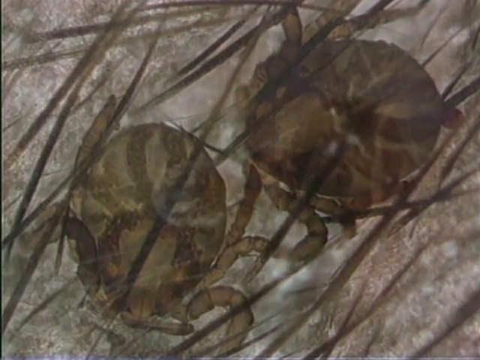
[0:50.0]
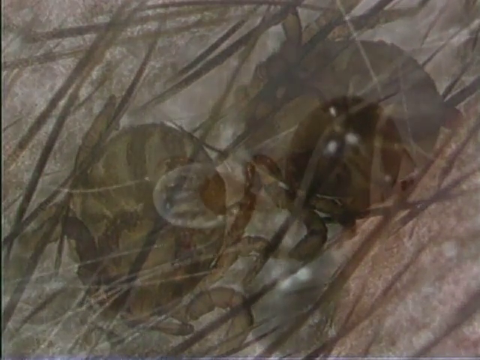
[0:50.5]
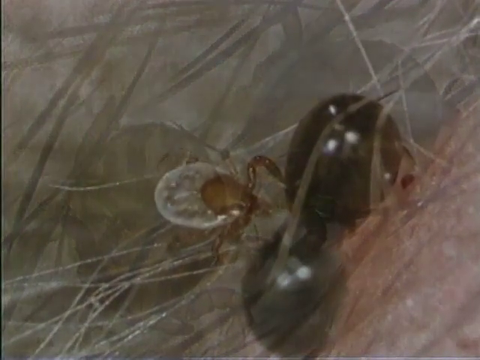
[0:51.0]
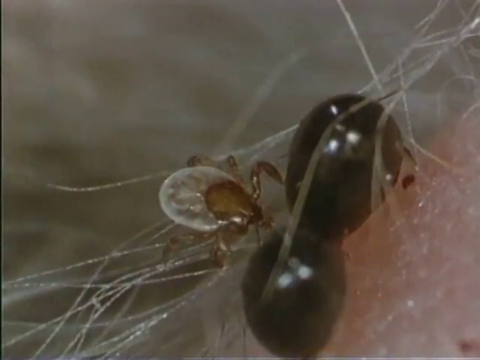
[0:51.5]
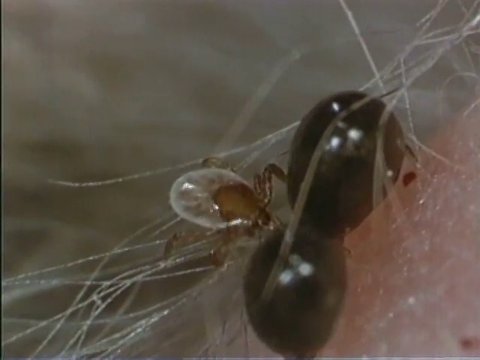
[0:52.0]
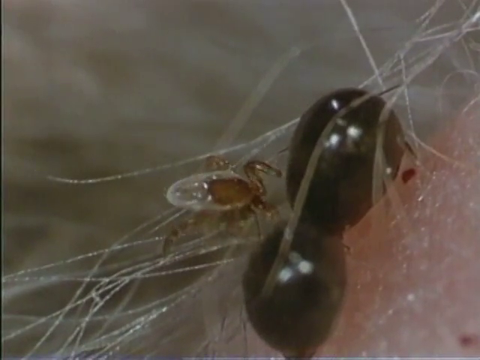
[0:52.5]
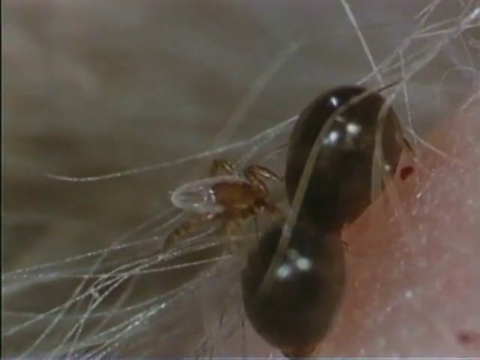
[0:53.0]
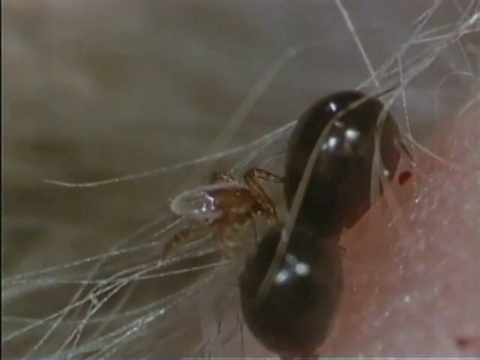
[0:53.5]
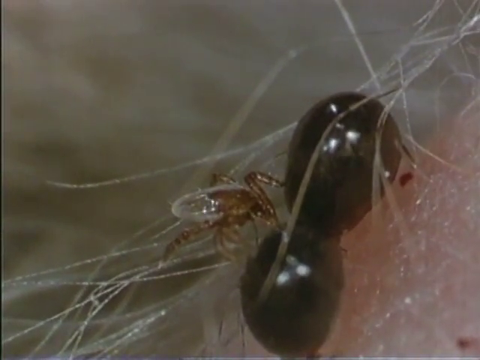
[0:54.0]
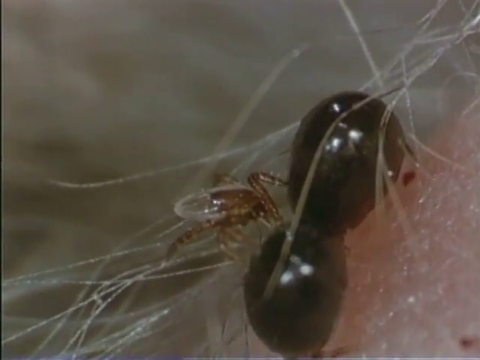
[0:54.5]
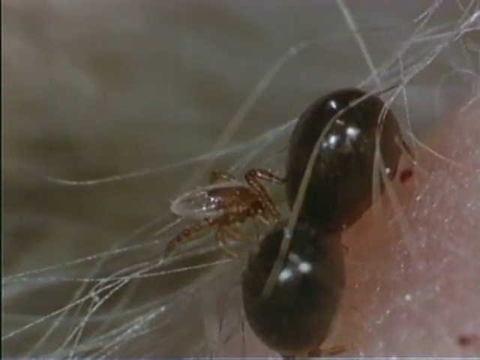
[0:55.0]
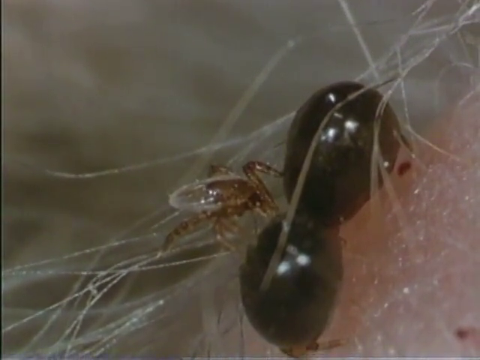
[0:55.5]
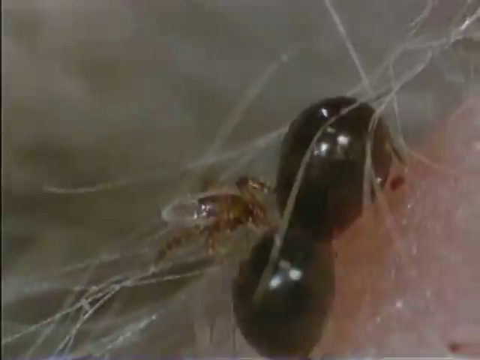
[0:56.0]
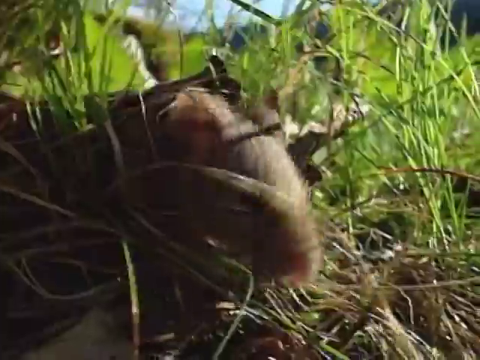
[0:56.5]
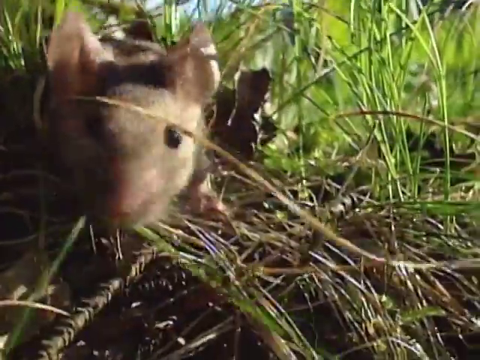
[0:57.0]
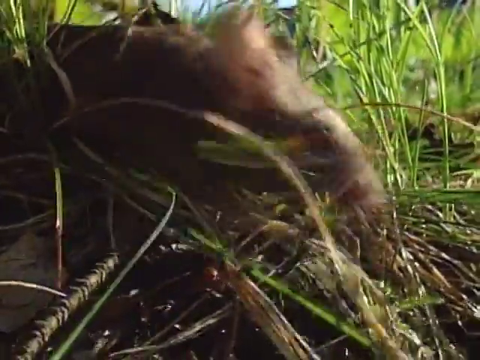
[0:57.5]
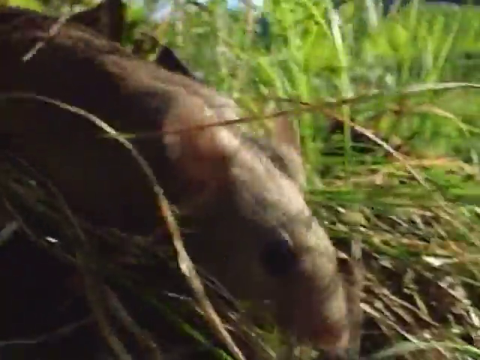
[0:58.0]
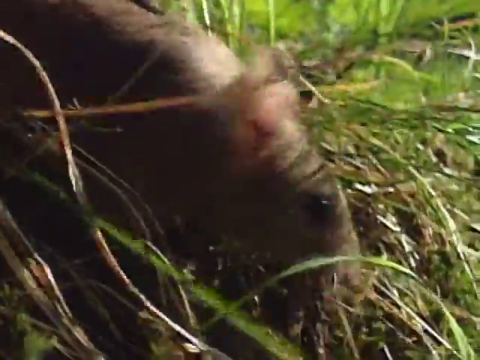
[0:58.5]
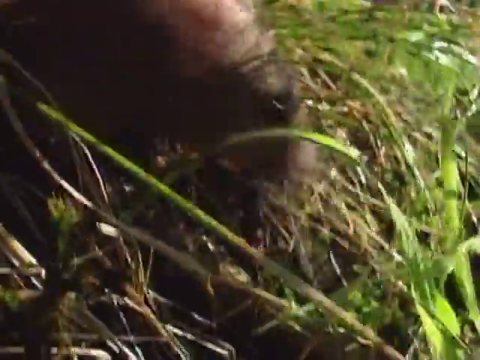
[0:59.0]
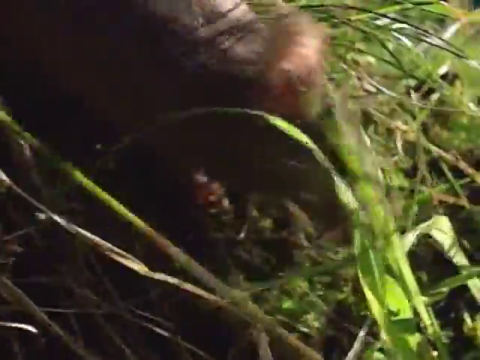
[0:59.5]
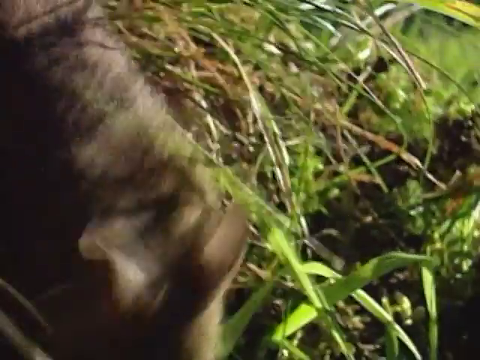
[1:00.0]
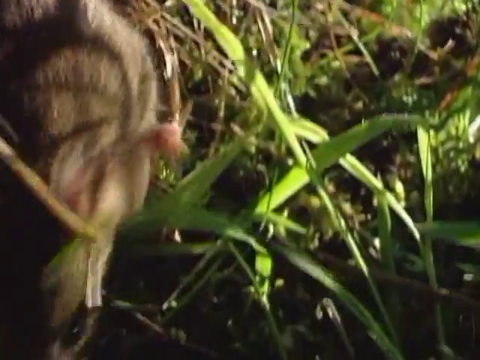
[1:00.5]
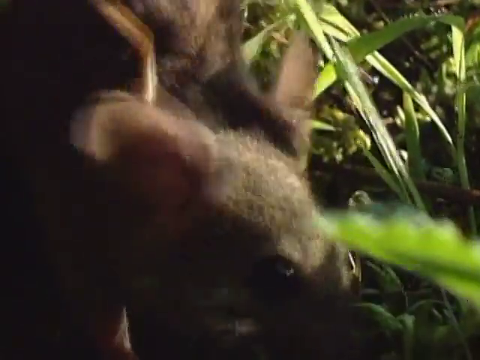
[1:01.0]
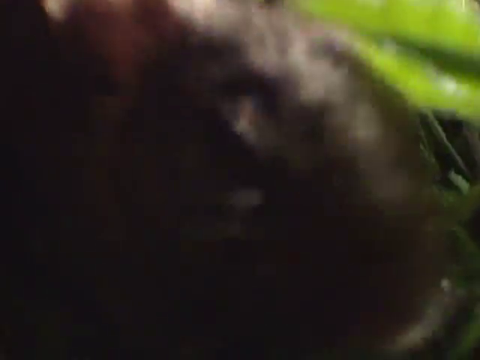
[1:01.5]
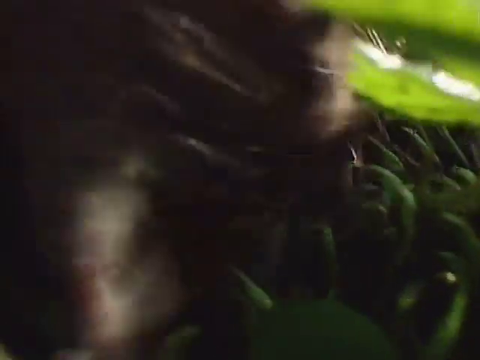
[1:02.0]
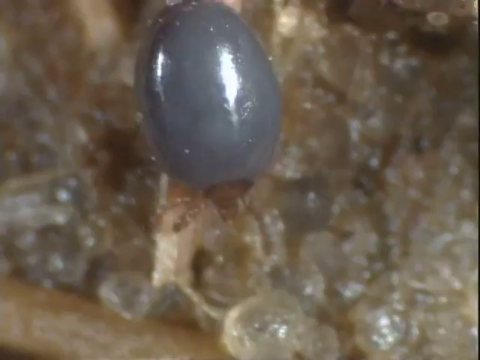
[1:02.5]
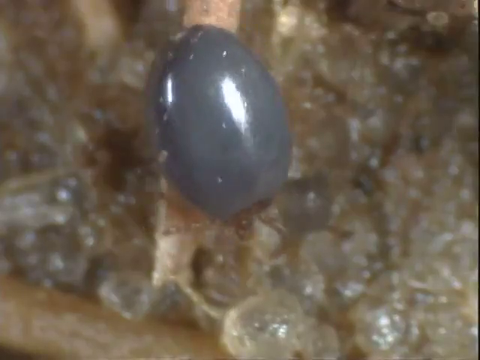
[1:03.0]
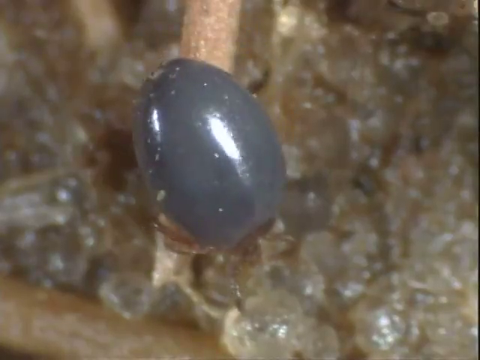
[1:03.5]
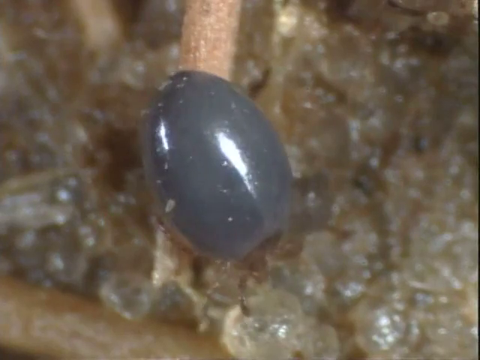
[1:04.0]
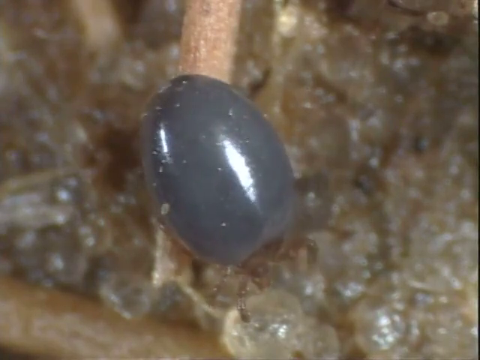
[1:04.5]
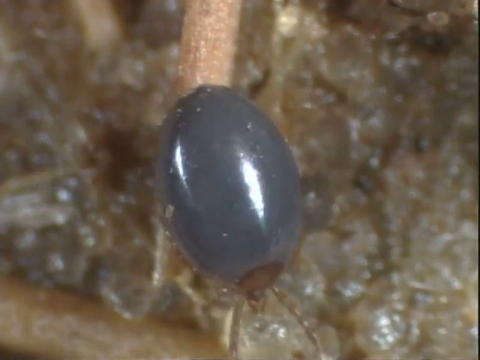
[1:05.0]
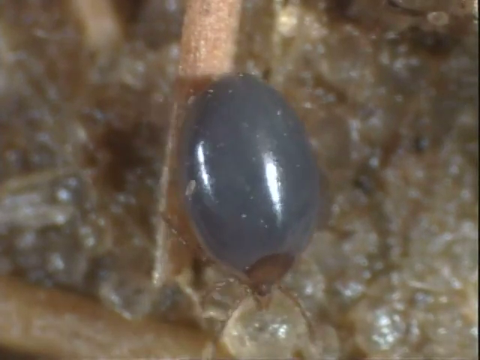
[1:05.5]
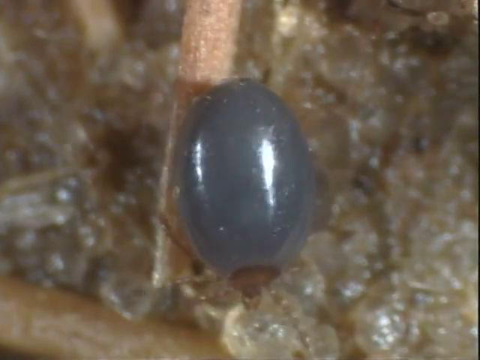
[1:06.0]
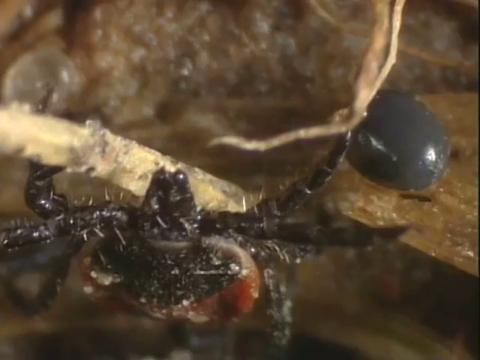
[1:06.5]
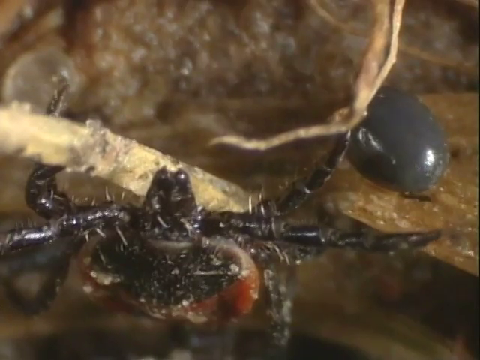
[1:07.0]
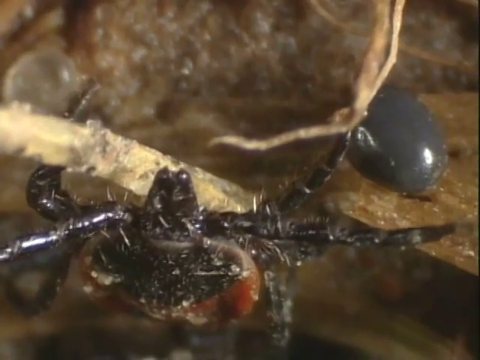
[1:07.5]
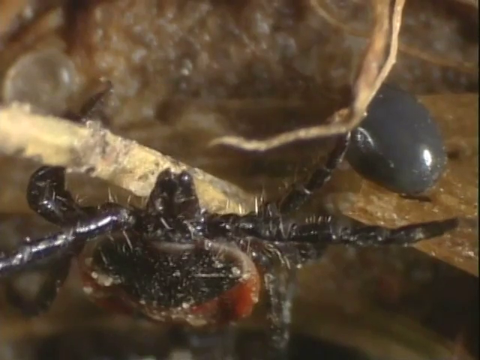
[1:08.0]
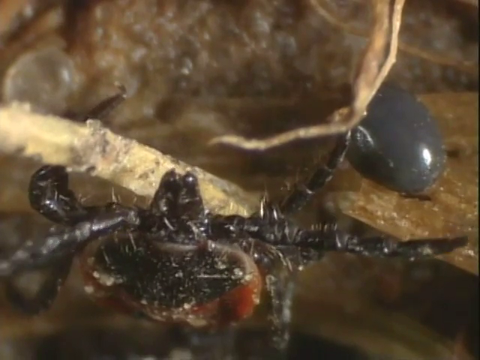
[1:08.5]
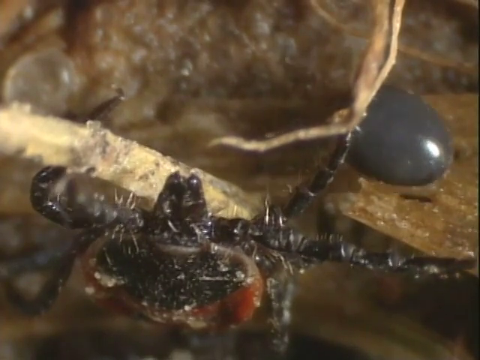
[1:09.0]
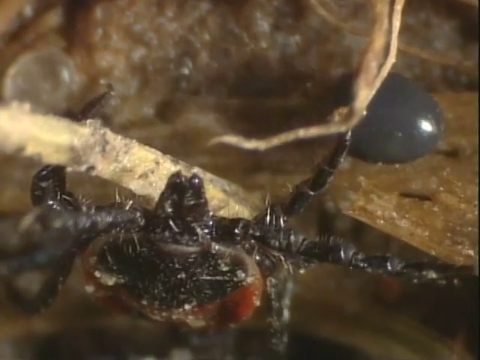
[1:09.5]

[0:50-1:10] A close-up shows a tick crawling on somebody's skin with two other inflated ticks right next to it. Then a rat that looks like the same field mouse crawls through grass, sniffing around, its beady eyes visible. Another close-up shows egg sacs and different ticks moving around on some kind of creature, with hair follicles visible. The ticks are pretty big looking, and some are very swollen, with large purple or dark black abdomens; they look like they have been eating quite a bit. The view is so close that it seems to be through a magnifying glass or some sort of microscope.